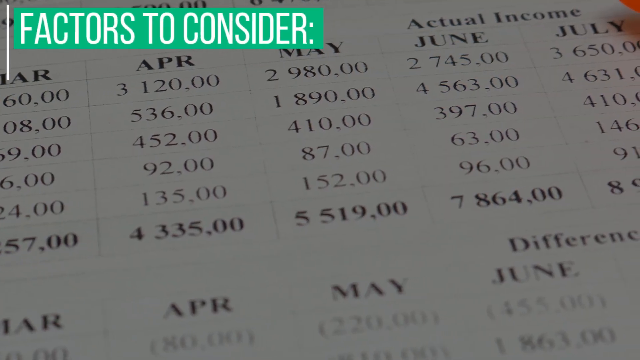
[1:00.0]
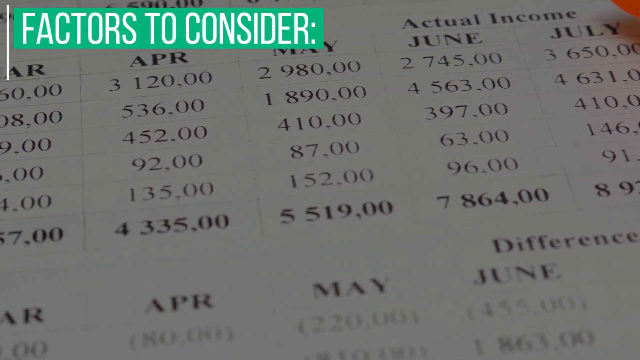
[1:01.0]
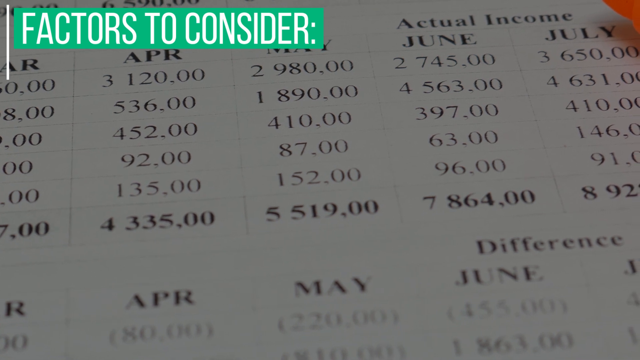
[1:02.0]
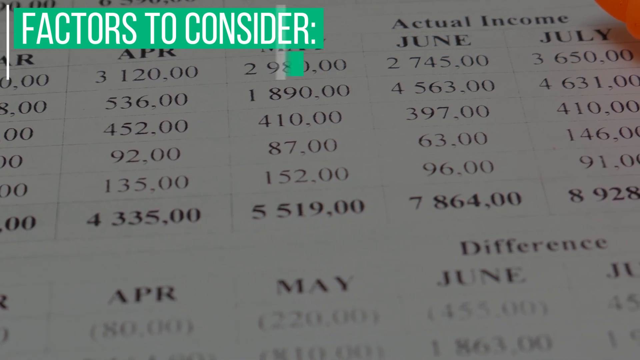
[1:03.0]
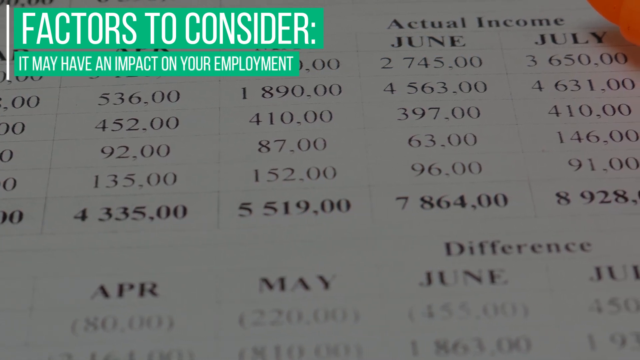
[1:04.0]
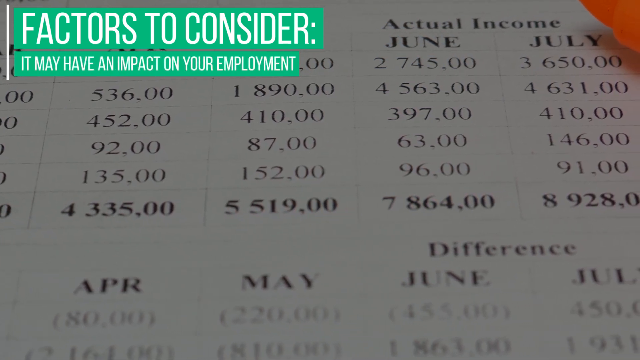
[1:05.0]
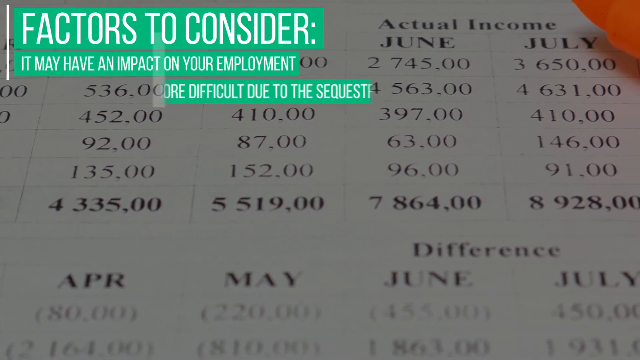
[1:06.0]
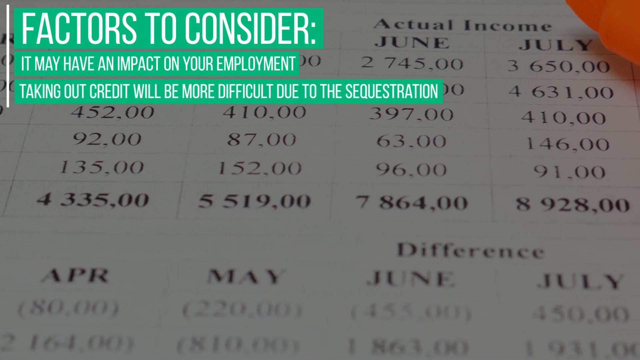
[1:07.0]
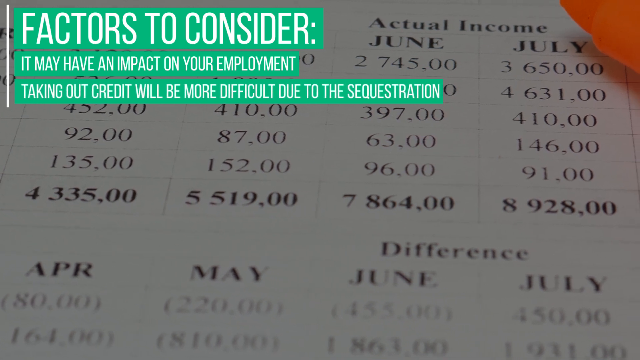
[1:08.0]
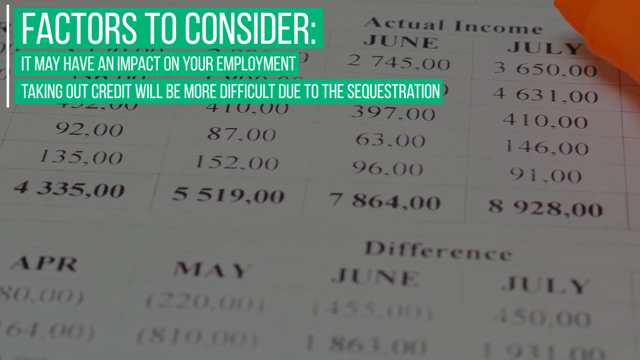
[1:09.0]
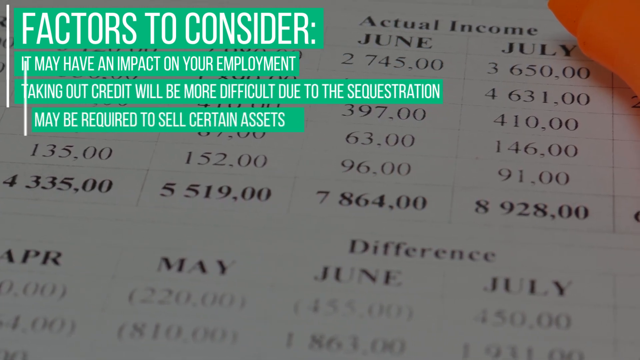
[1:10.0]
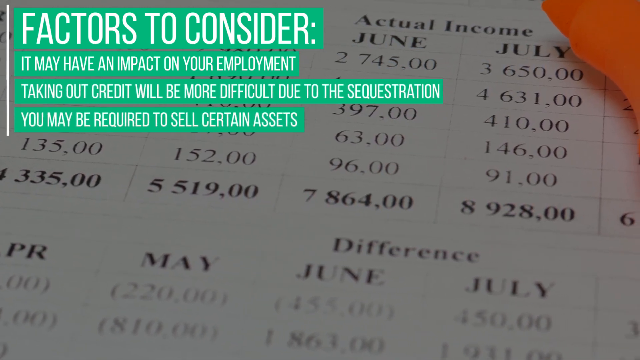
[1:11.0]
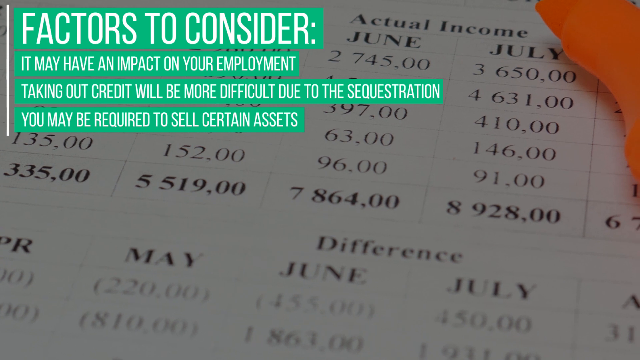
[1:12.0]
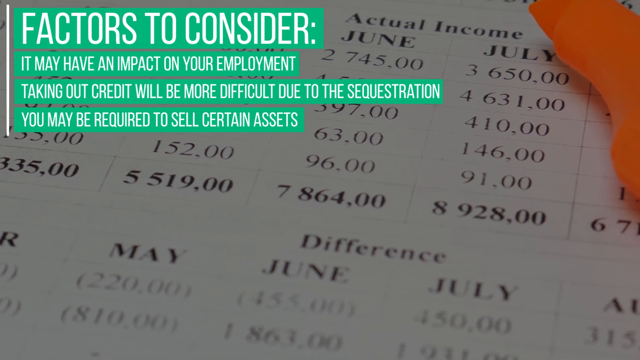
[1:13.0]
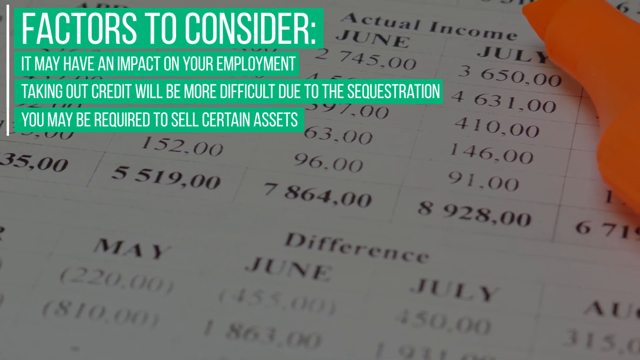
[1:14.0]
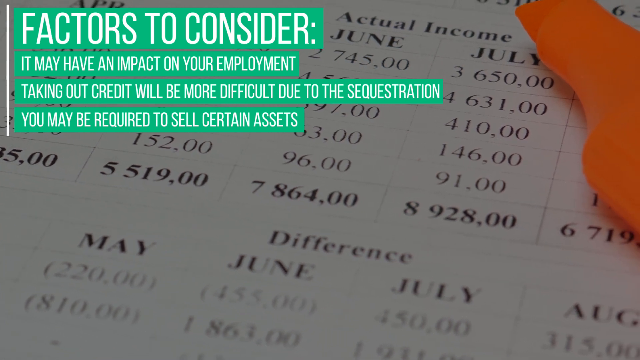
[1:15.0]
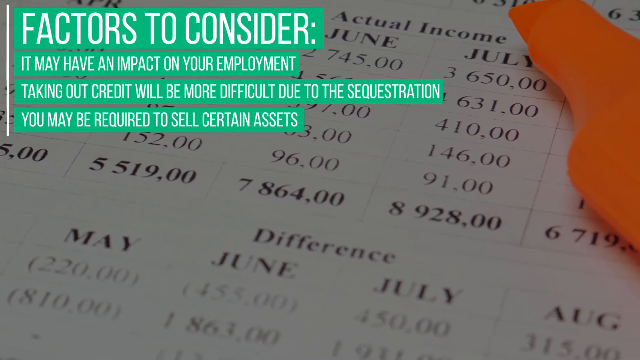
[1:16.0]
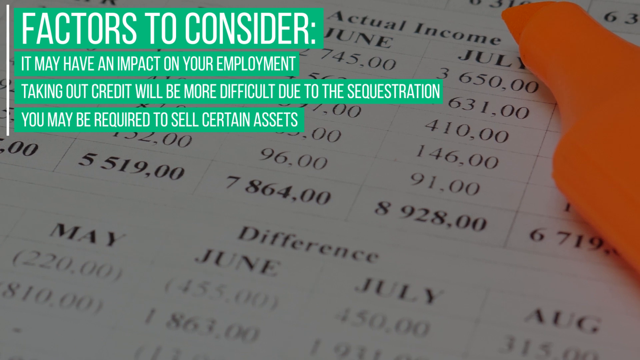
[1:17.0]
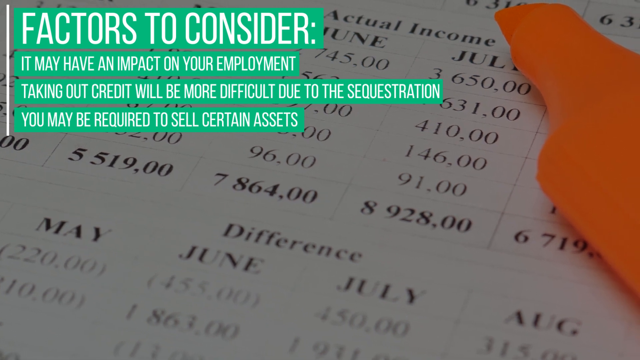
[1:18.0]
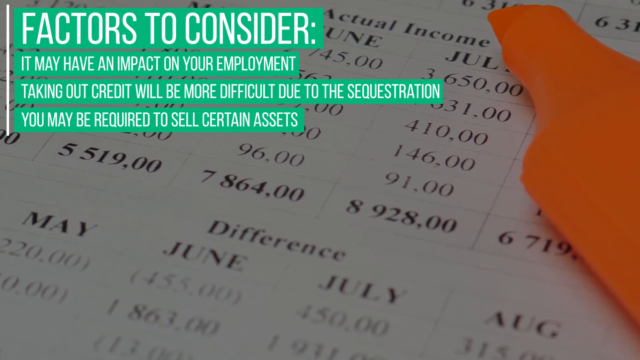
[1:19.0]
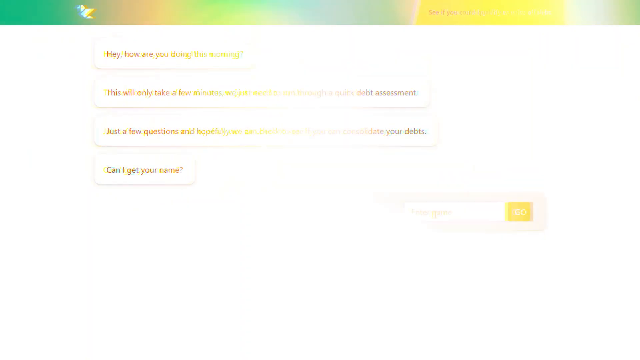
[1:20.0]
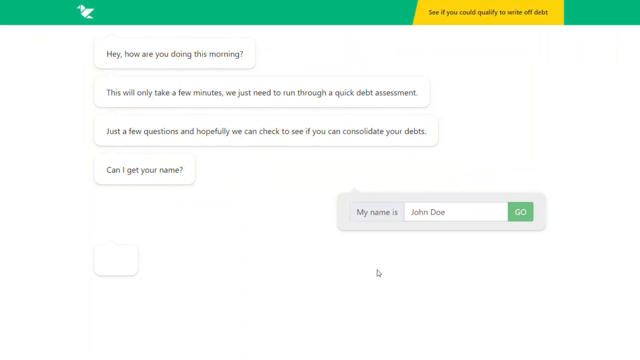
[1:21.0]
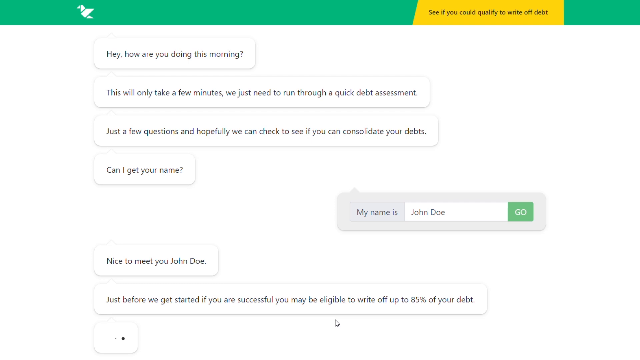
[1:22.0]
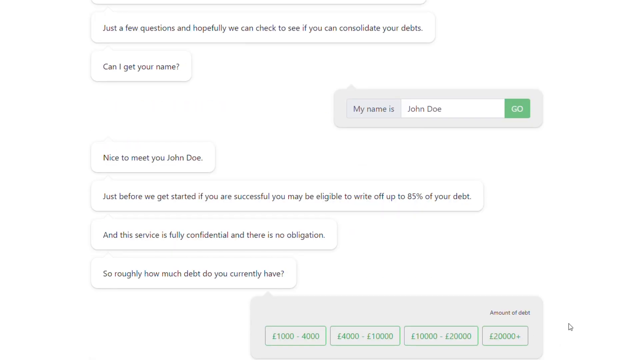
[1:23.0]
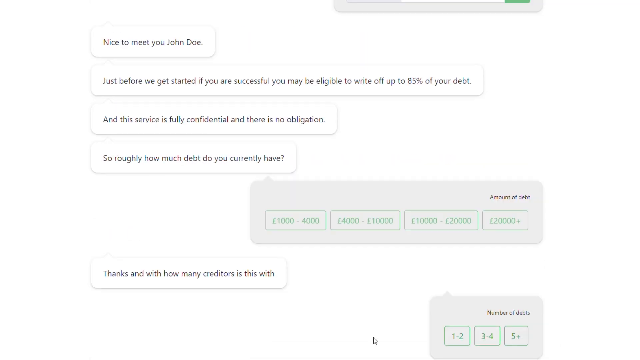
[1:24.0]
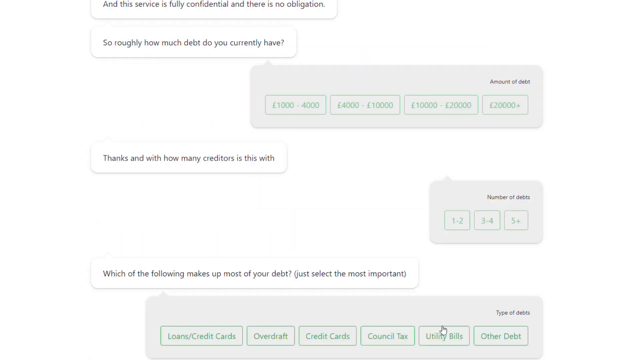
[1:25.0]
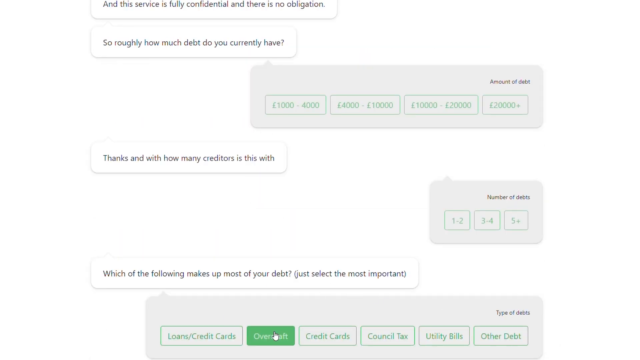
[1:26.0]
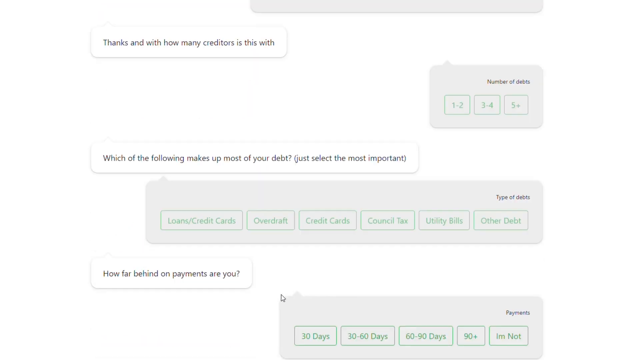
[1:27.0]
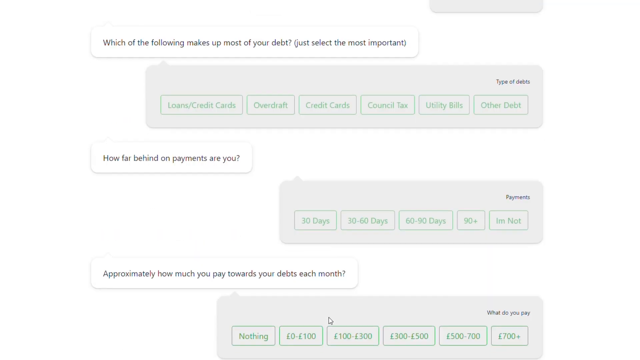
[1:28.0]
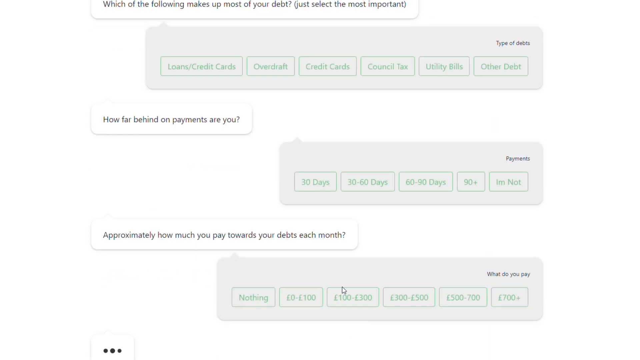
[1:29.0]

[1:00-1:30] The "factors to consider" text appears: "It may have an impact on your employment," "taking out credit will be more difficult due to the sequestration," and "you may be required to sell certain assets." Then the video shows someone chatting back and forth with an AI bot, which looks to be helping them figure out where they are with their debt, what they still need to do, and how they could be helped, apparently by a company or government organization.